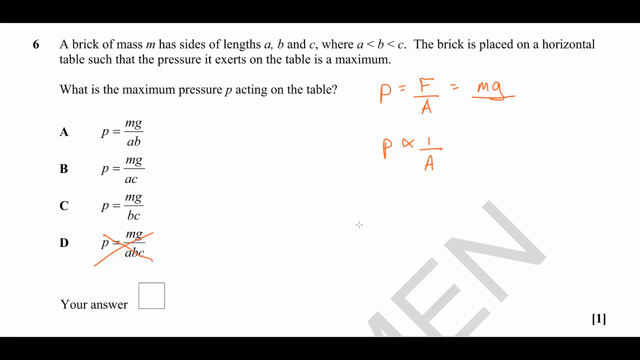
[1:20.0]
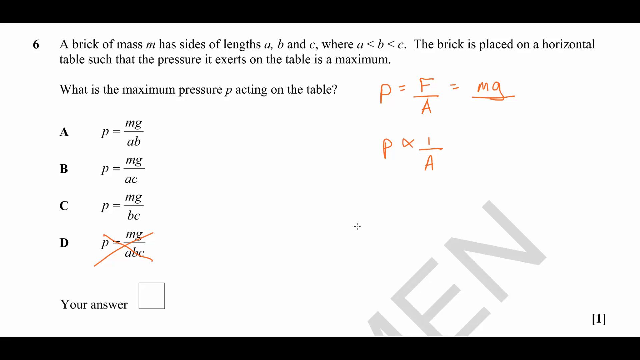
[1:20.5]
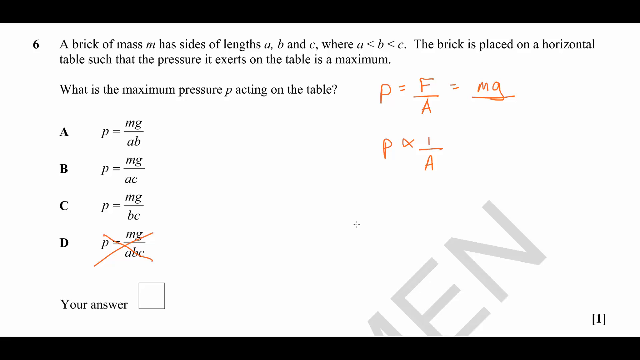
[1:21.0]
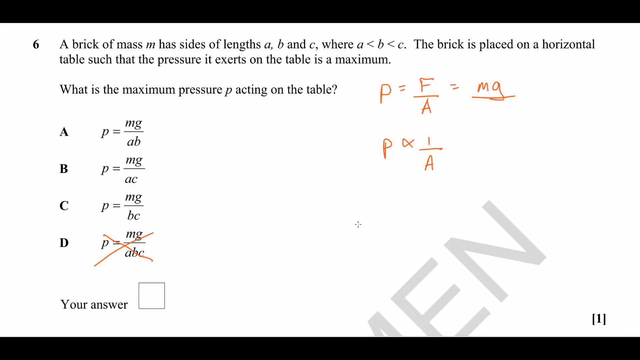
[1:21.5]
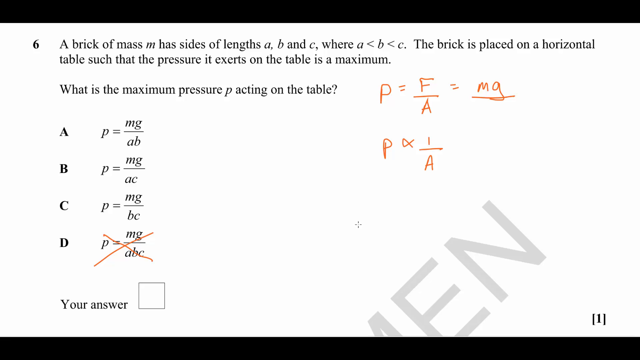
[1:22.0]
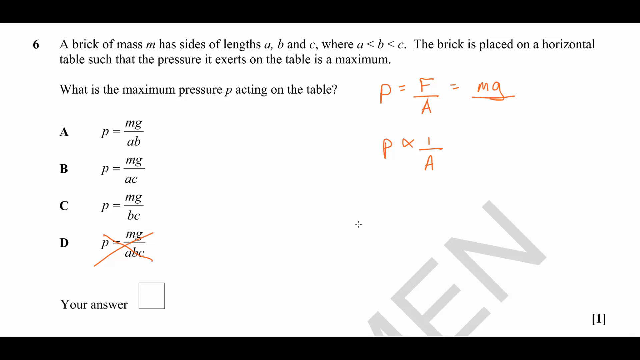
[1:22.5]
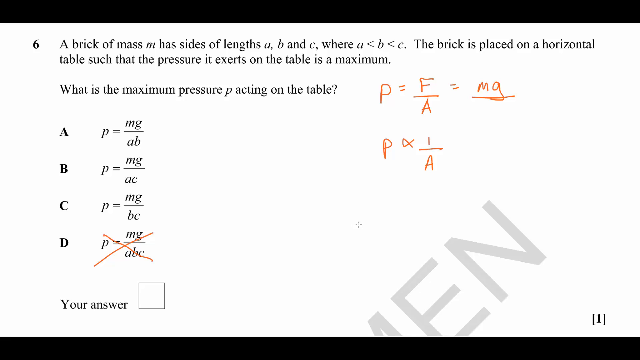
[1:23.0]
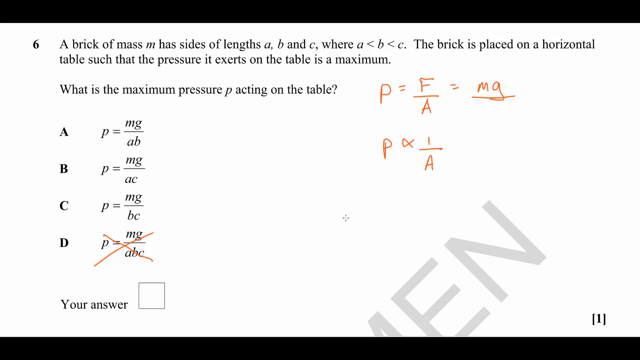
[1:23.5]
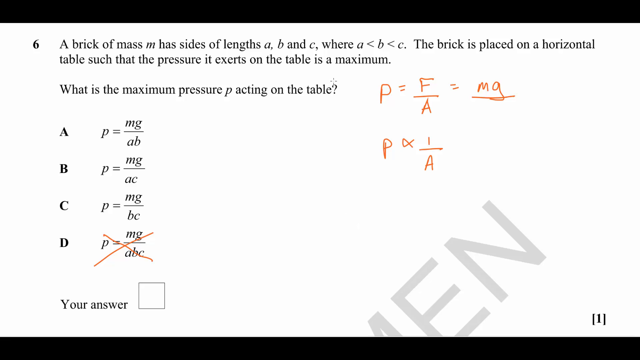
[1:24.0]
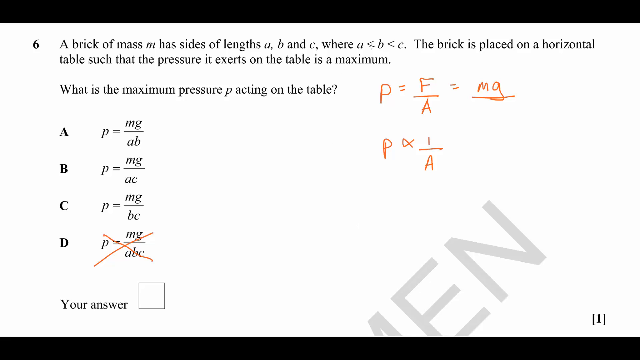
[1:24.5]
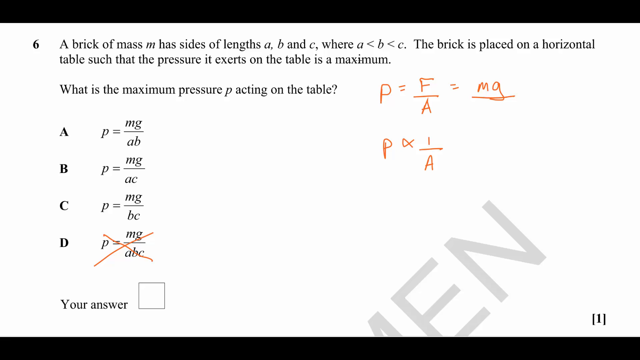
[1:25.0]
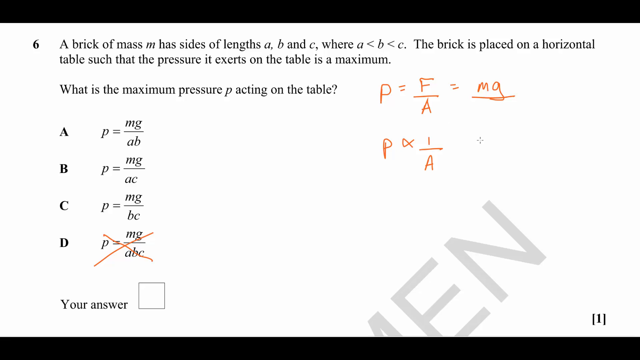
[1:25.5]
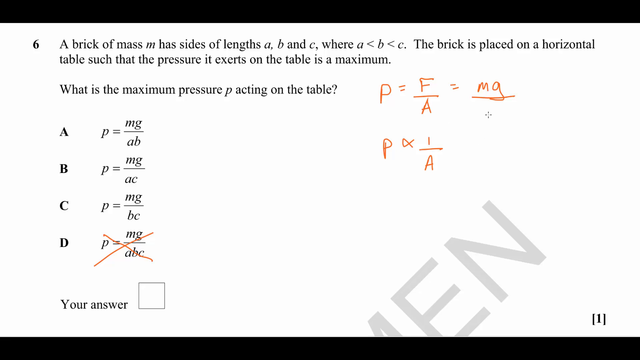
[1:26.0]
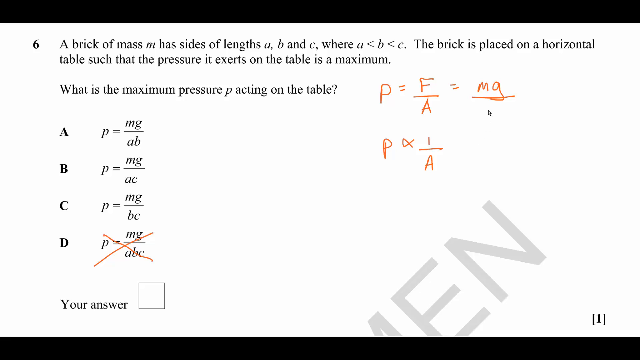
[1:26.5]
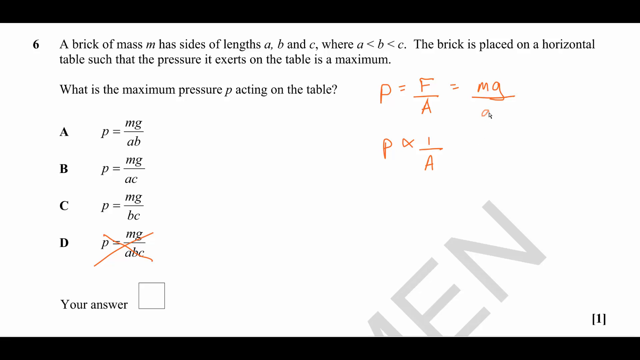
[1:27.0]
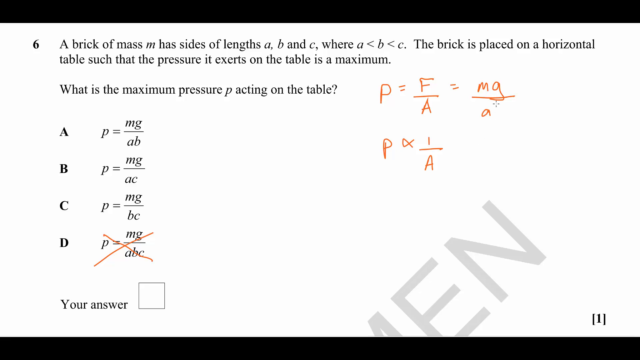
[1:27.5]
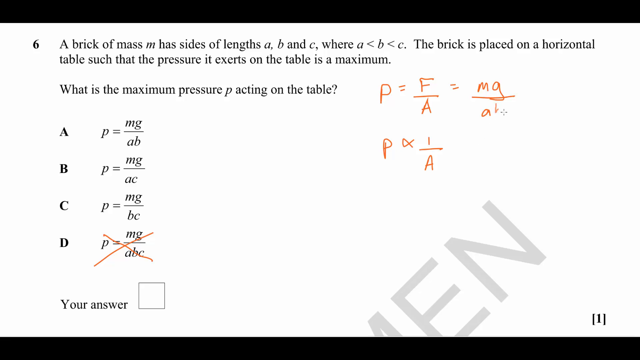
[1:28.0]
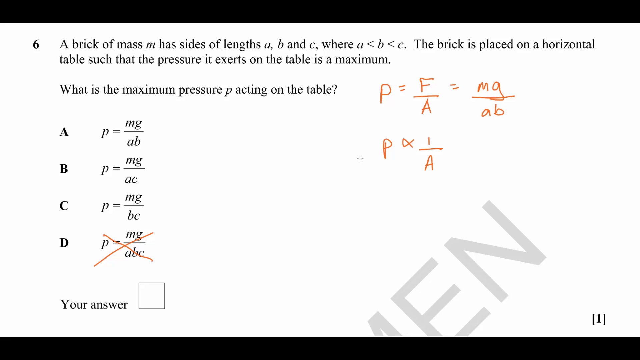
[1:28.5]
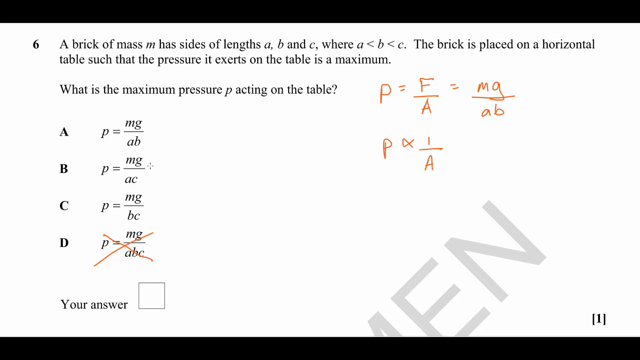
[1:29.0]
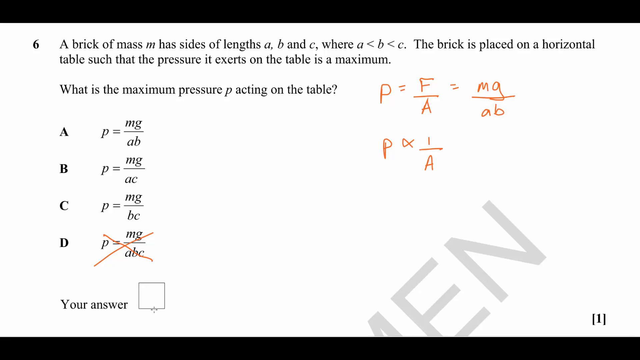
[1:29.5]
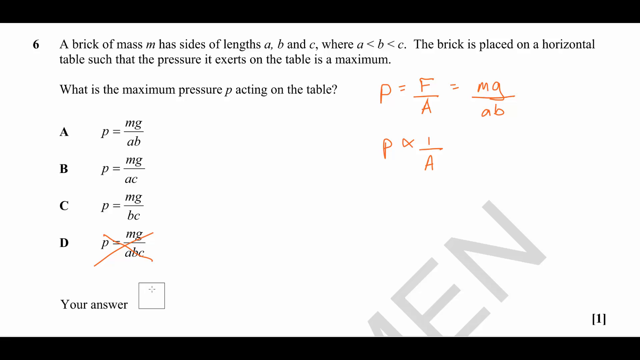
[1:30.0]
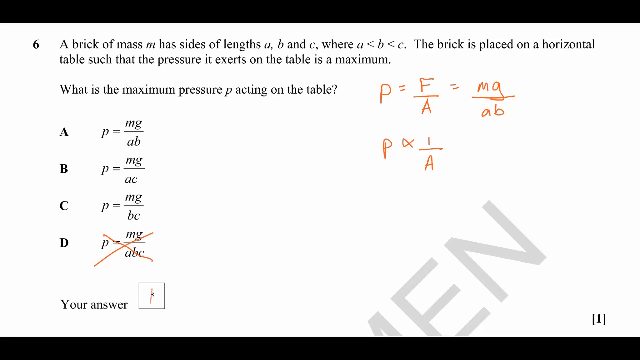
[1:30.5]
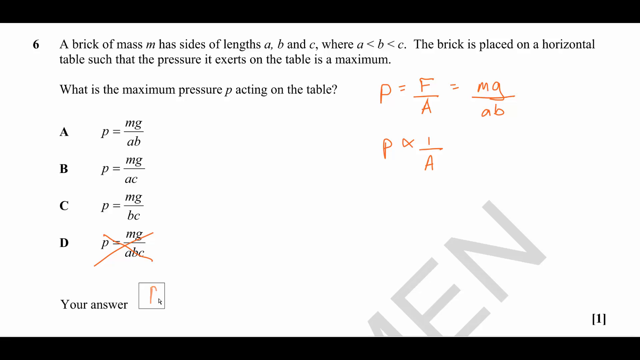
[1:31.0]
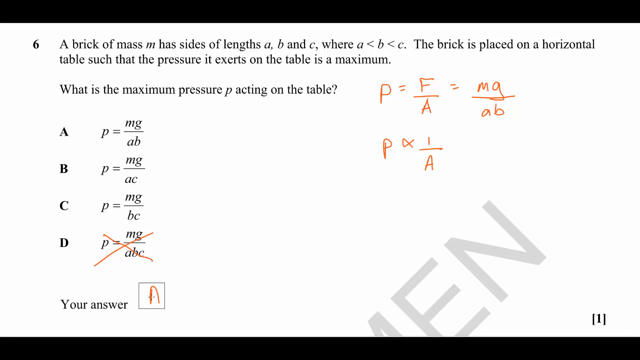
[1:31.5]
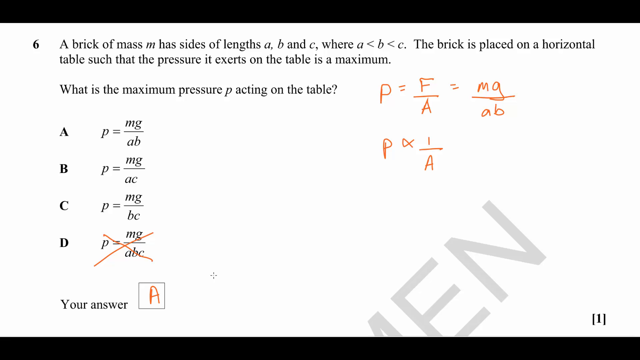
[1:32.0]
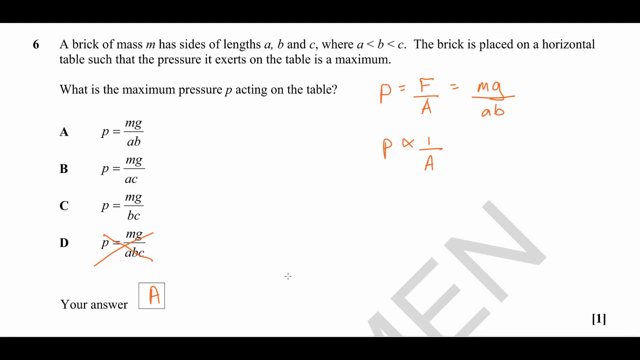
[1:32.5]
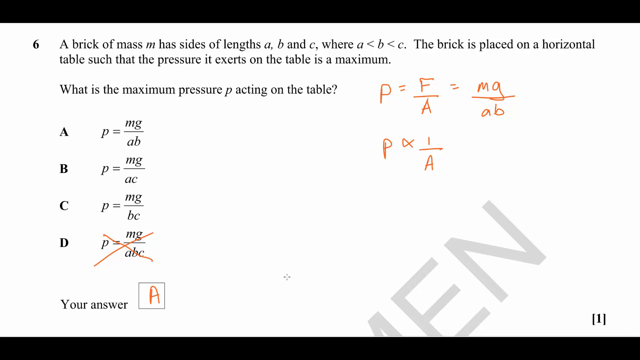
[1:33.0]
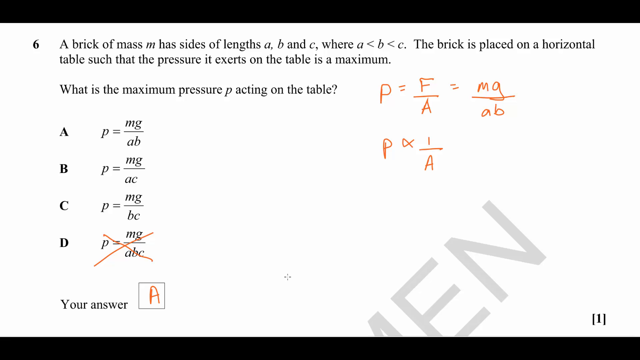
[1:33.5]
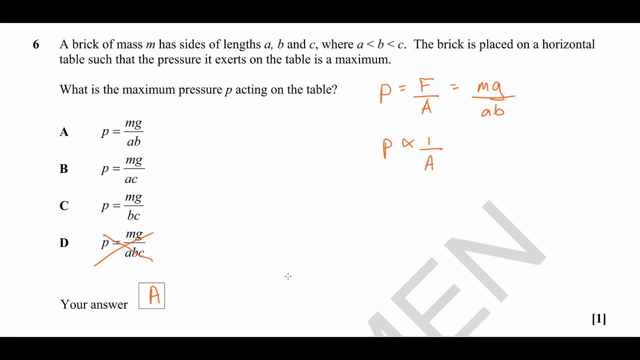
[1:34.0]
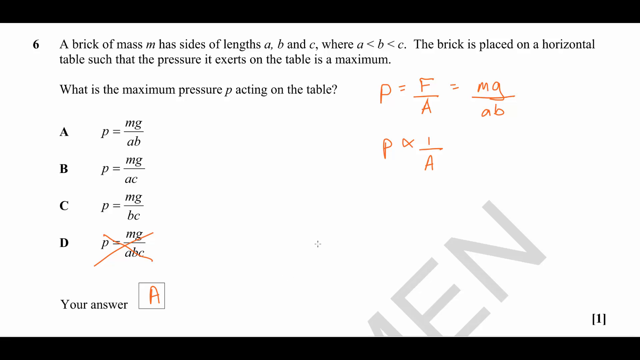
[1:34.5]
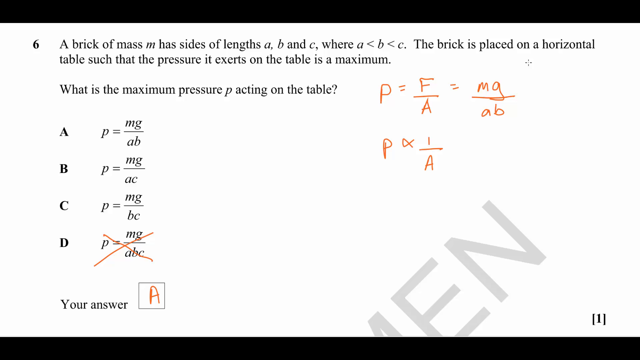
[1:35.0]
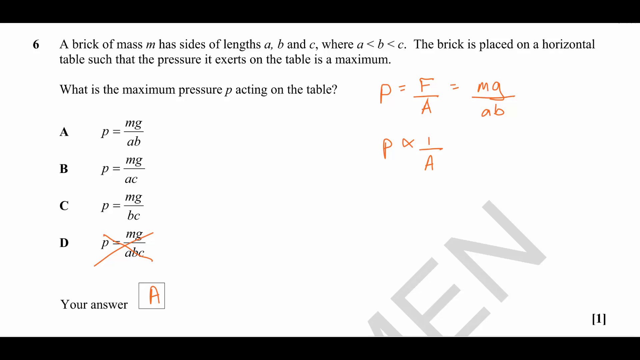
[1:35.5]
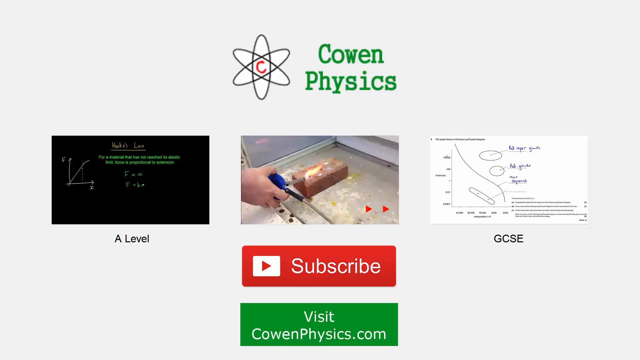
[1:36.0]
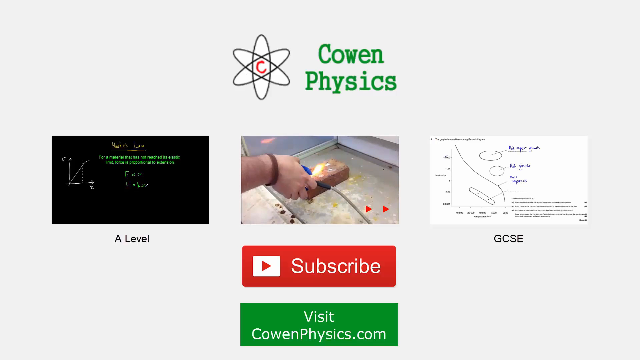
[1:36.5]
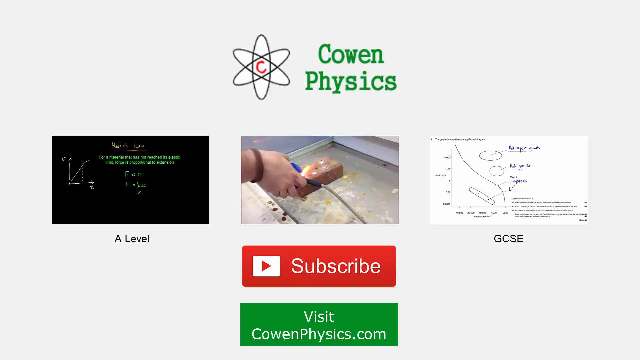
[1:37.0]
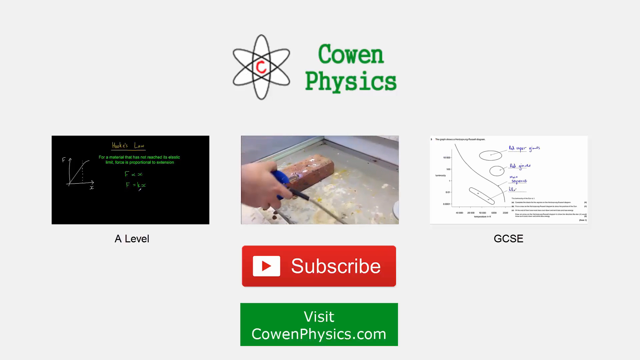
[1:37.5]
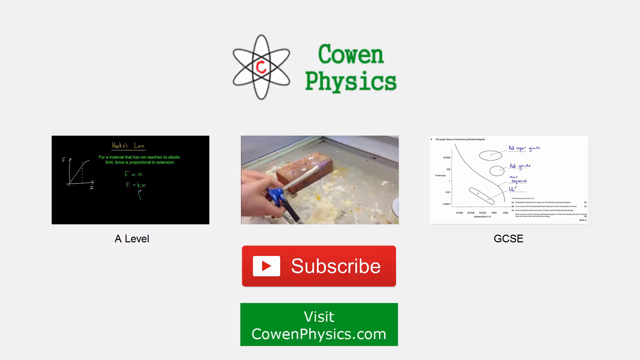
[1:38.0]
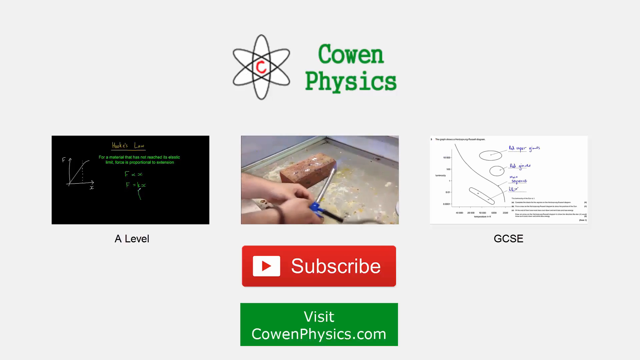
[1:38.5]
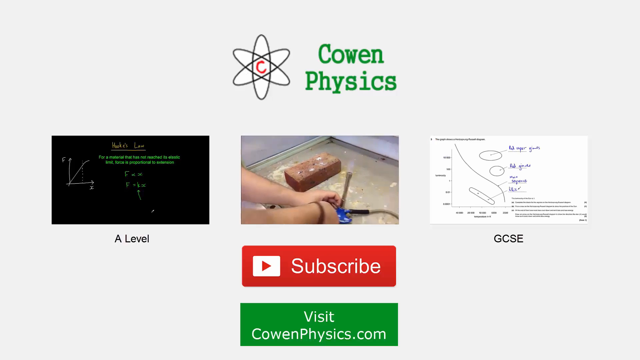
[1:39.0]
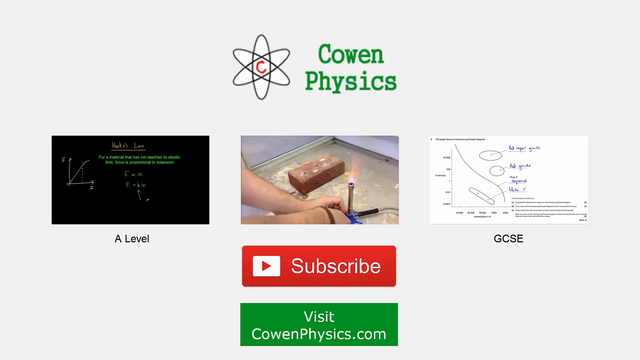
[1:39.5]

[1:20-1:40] The cursor hovers near the center of the screen, then moves back to the question stem before writing "ab" into the denominator of the first handwritten line, which now reads "p = f/a = mg/ab". A appears to be the correct answer, and the letter A is written in the blank box beside "your answer". The screen then transitions to an outro with the Cohen Physics logo at the top center, three video previews in a row across the center, a subscribe button underneath the center preview near the bottom, and a green button reading "visit coenphysics.com" in white text. The caption under the left preview reads "A level" and the caption under the right preview reads "GCSE".